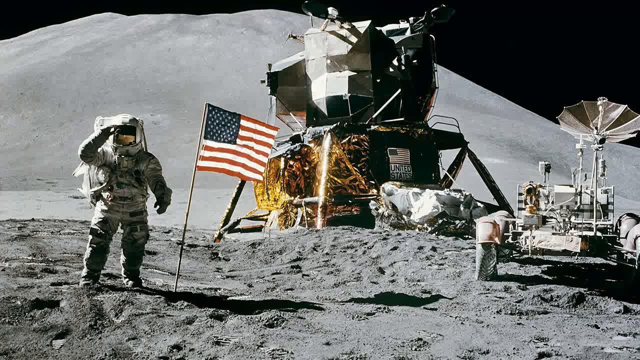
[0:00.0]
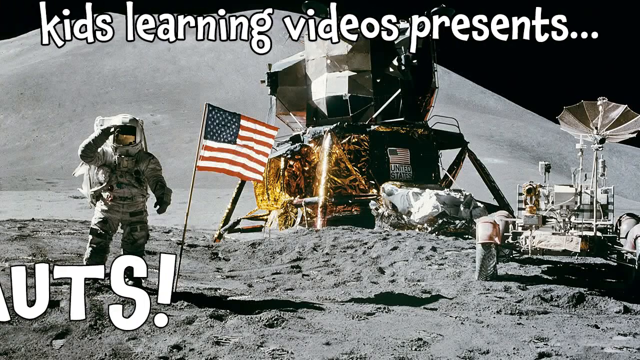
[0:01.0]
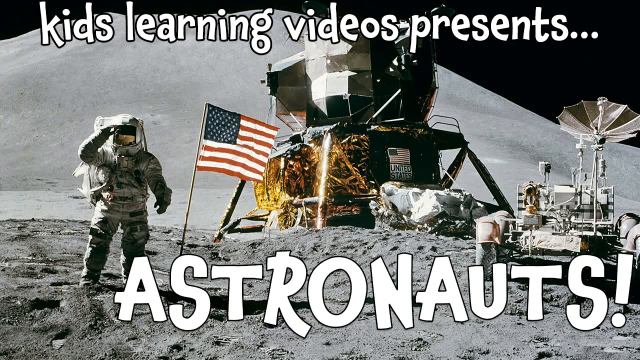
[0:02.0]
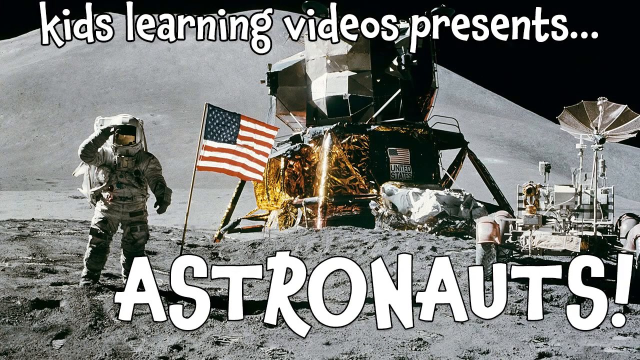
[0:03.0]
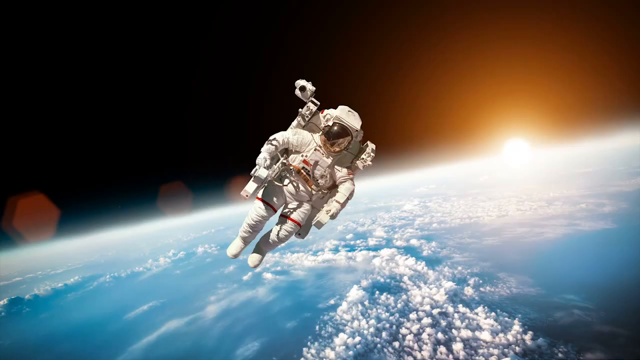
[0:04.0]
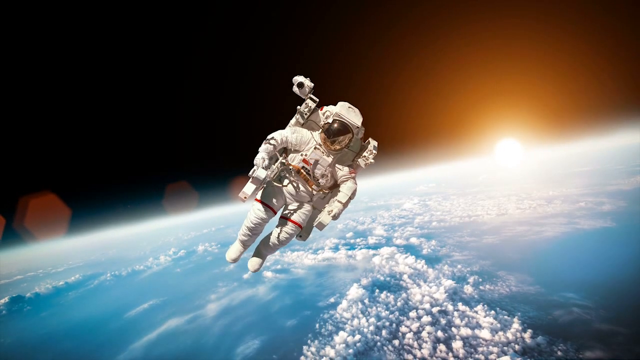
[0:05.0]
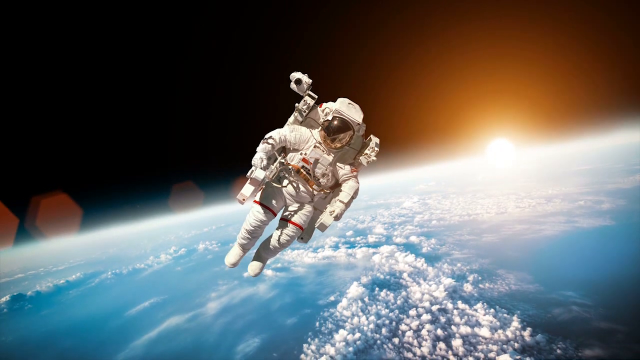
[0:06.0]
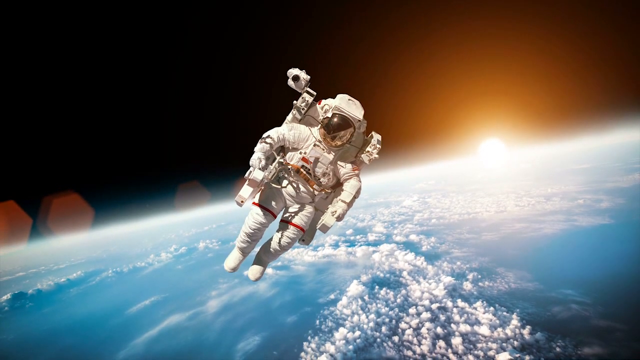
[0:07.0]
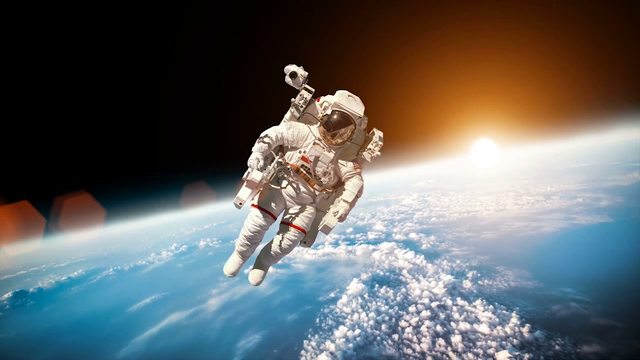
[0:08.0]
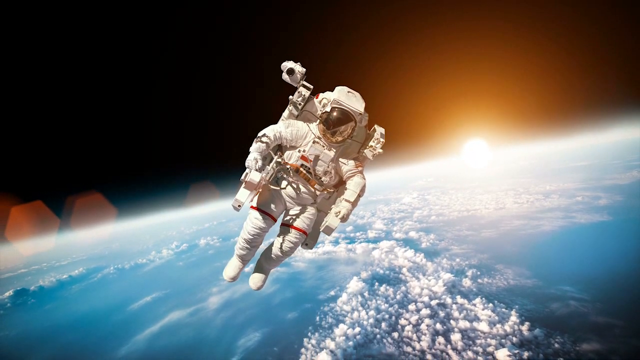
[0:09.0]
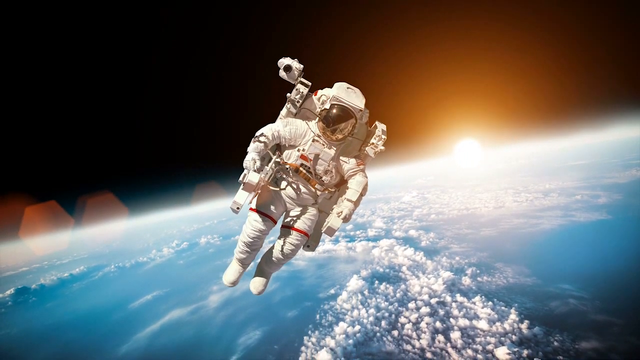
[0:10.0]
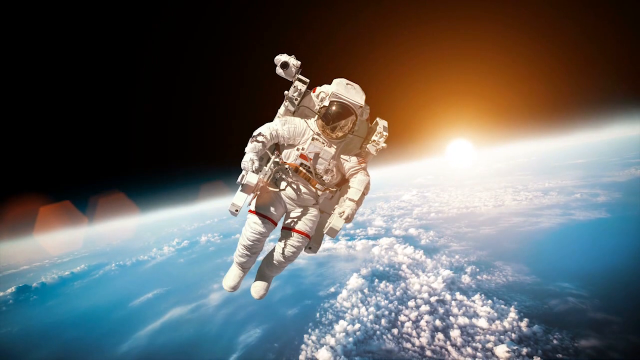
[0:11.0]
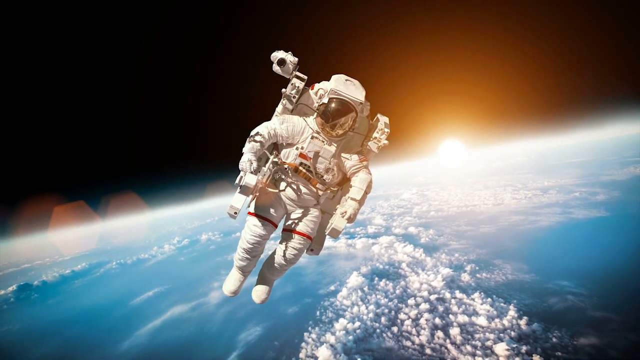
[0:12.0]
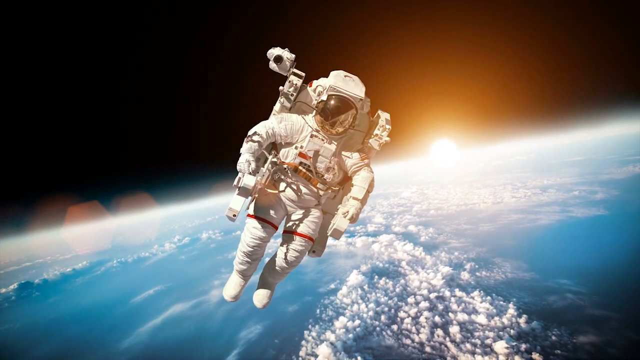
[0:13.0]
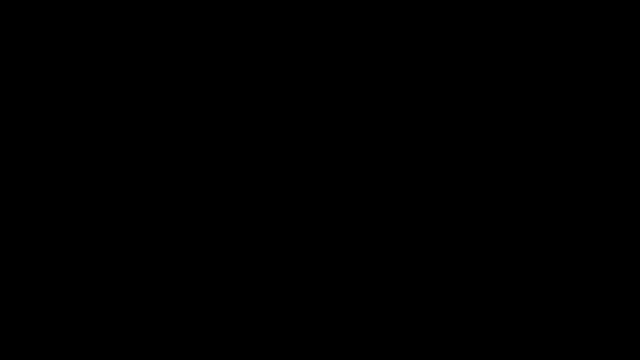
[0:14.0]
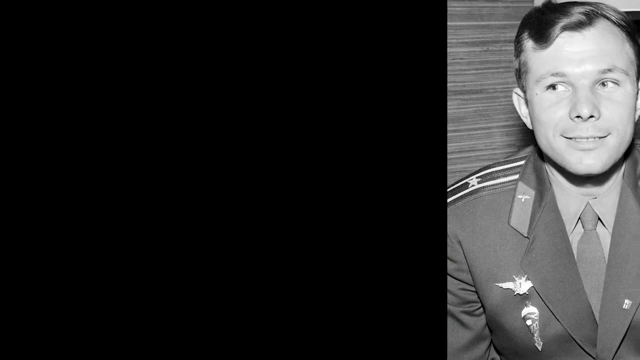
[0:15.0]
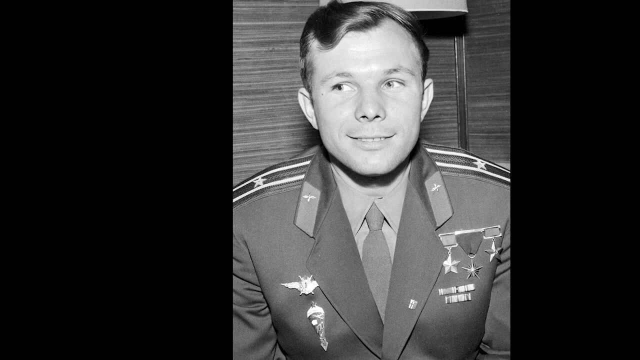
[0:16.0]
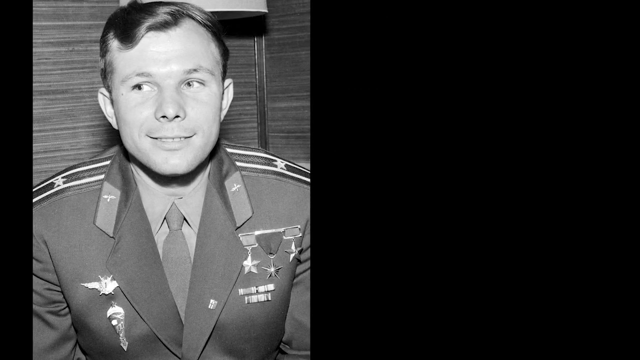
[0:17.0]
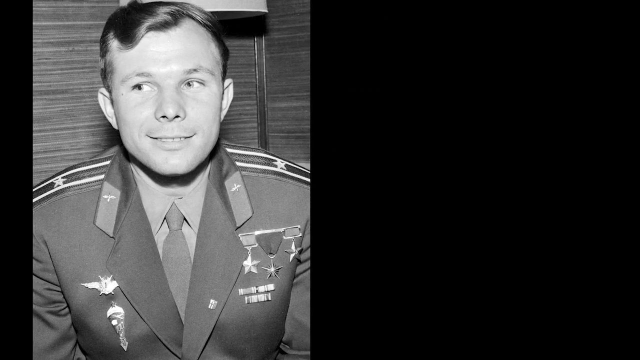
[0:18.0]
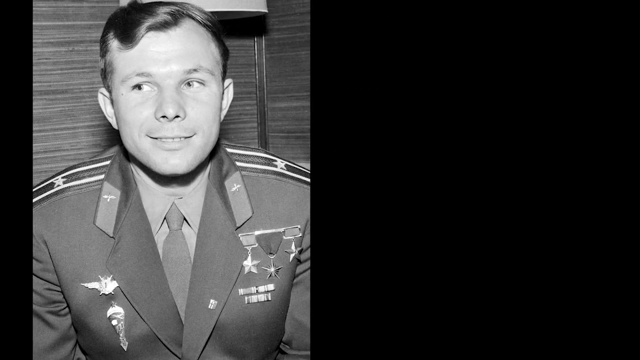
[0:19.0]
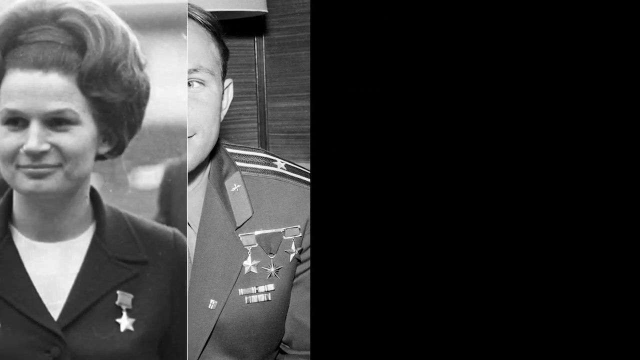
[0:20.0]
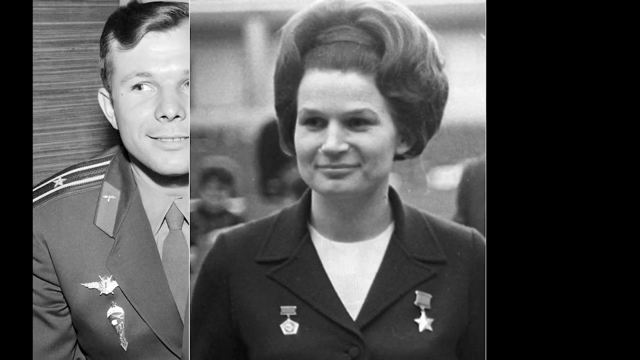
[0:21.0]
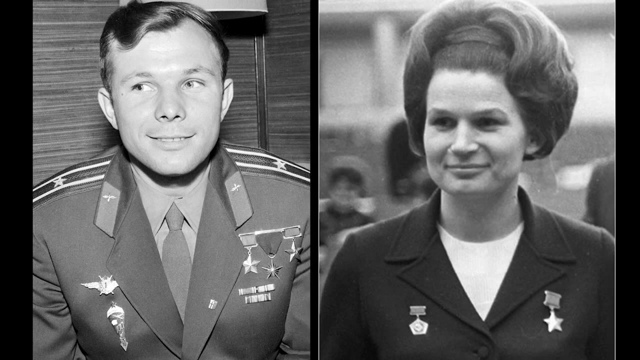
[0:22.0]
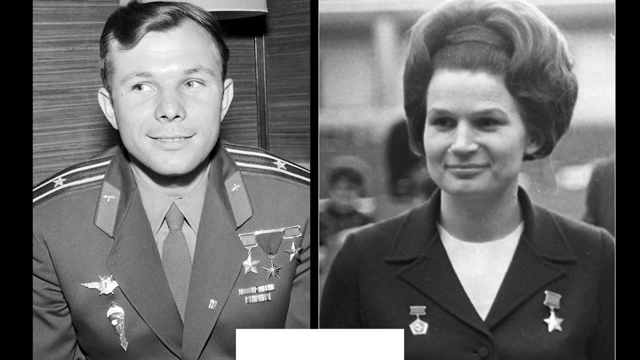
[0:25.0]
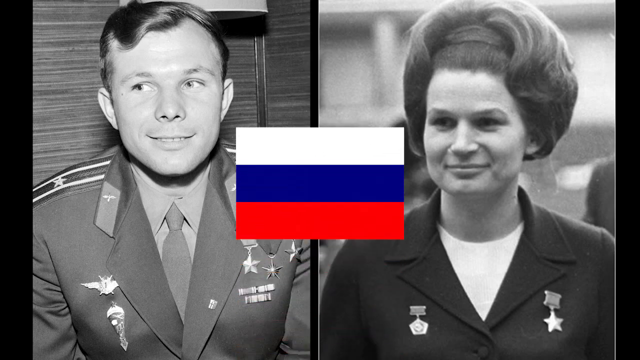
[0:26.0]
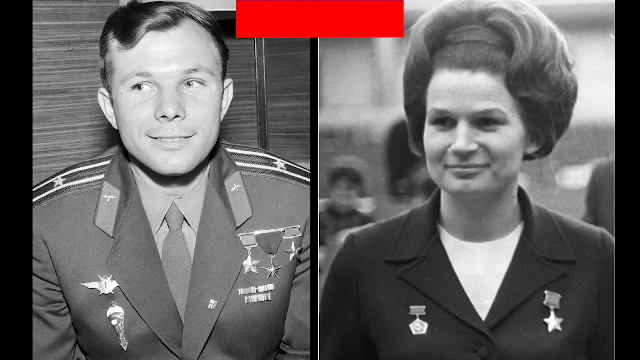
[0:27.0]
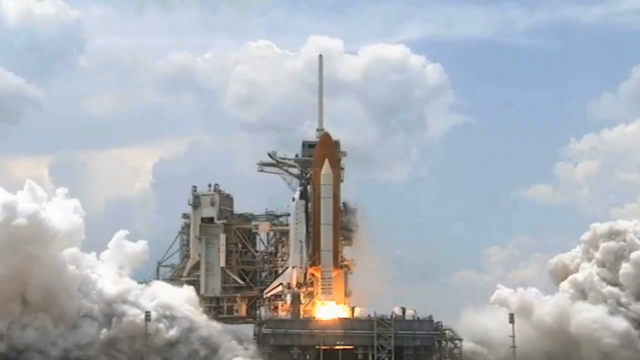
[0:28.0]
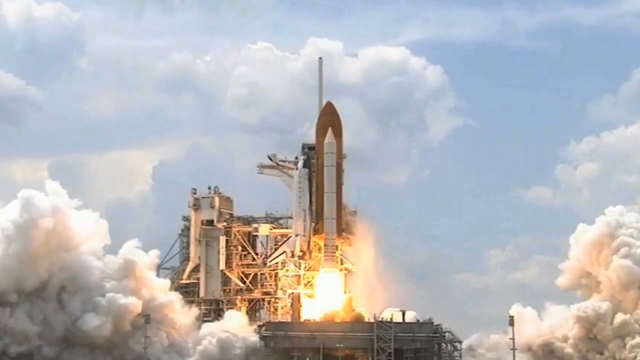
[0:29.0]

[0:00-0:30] The video opens on a slideshow. At the top there seems to be text reading "kids learning videos presents...", and below it, in a large white font, "astronauts!" The background image is apparently an astronaut on the moon, with what seems like an American flag. The astronaut holds his right hand in front of his forehead, saluting. Other space-related structures are visible, including what seems to be a rover on the right side and a small space structure. The next image is a very fake-looking one of an astronaut floating in space, kind of tilted, with space as the backdrop. Just the surface of the earth is in the background, looking very fuzzy, and the sun kind of fades with a glare. It is an animation, and the astronaut gets closer and closer. Next comes a photo of a man in a suit that looks like a Navy suit, followed by a woman. Both have medals on their chest pockets, and the photos appear to be old since they are black and white. The Russian flag is shown, and then a spaceship launches into space.